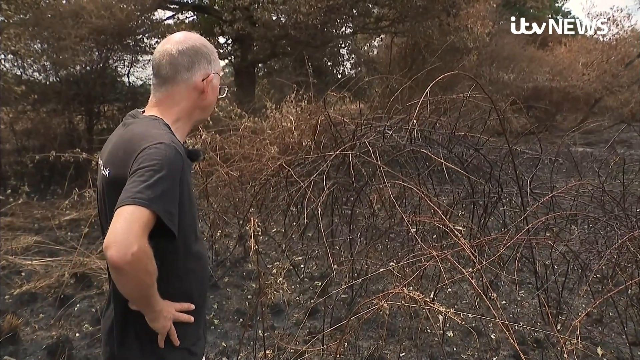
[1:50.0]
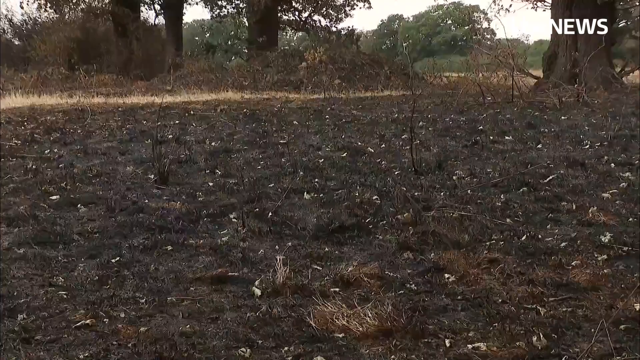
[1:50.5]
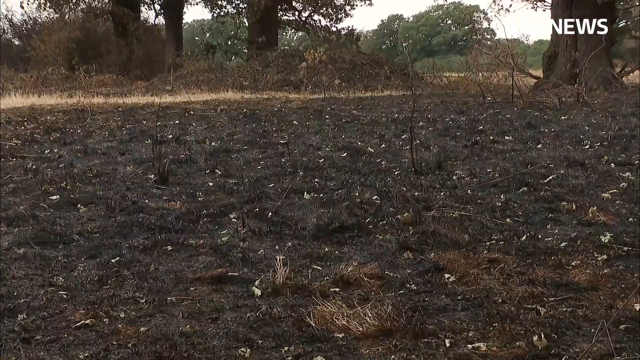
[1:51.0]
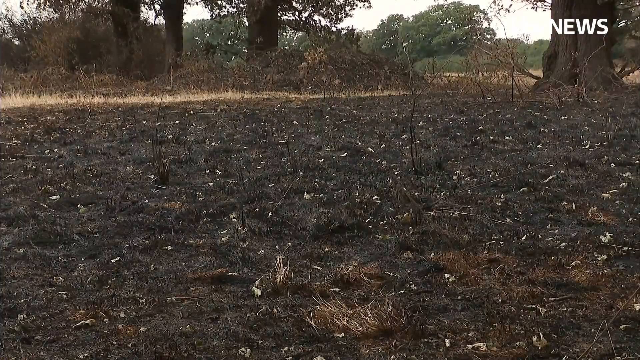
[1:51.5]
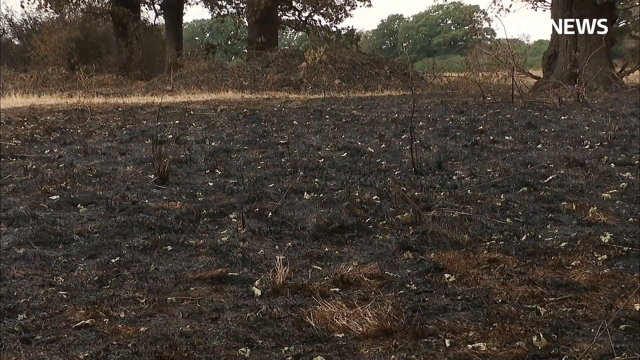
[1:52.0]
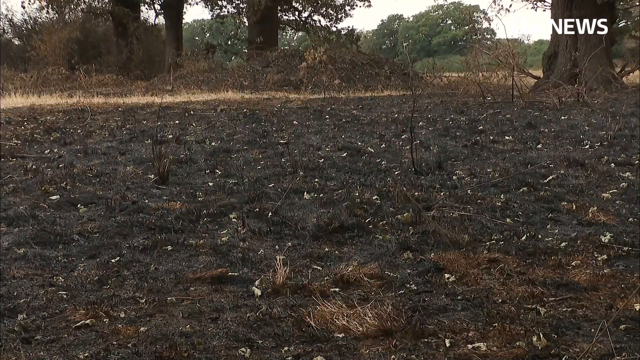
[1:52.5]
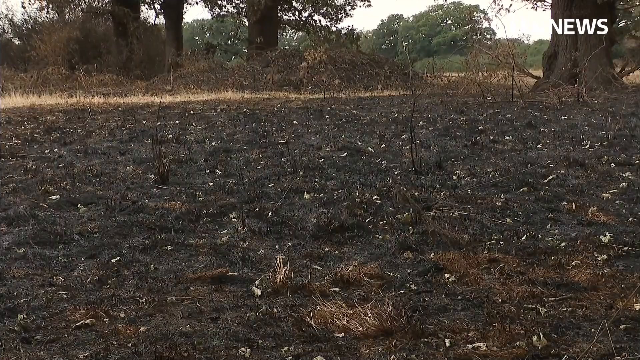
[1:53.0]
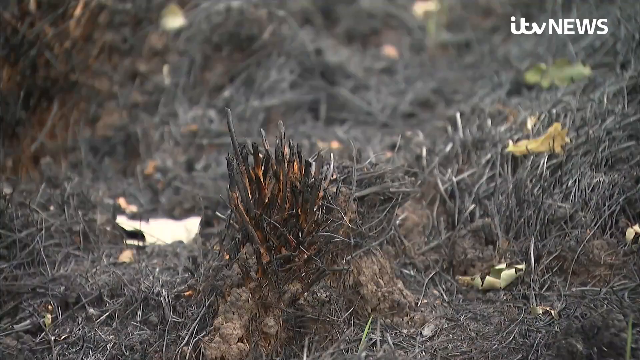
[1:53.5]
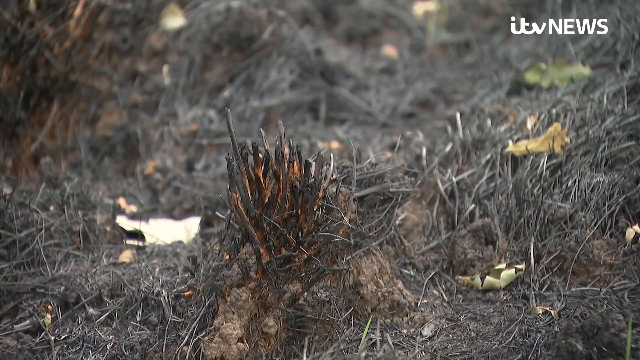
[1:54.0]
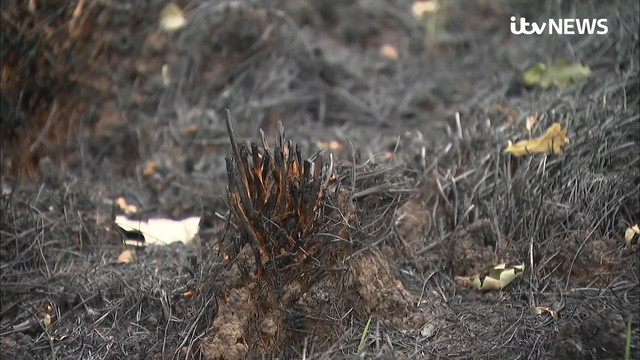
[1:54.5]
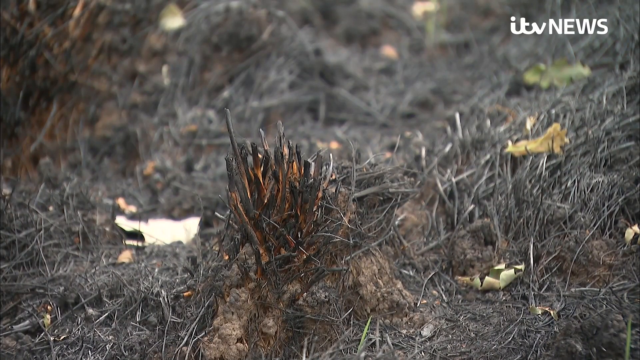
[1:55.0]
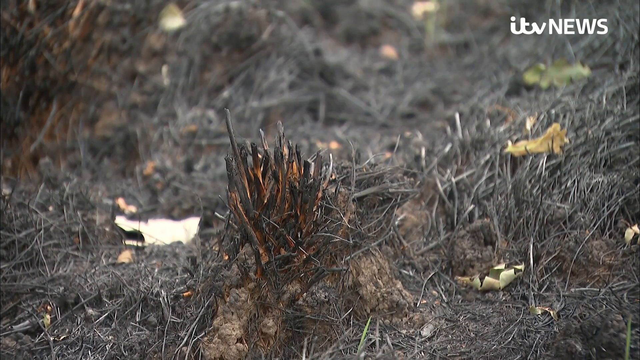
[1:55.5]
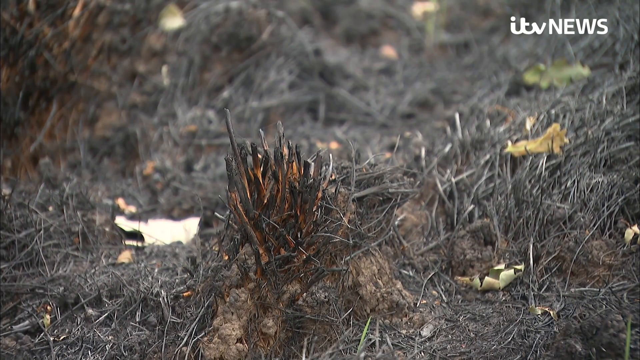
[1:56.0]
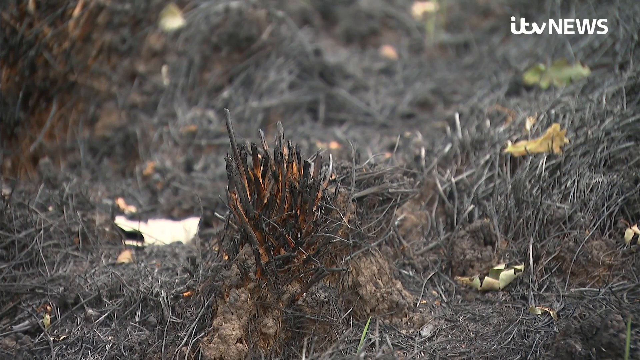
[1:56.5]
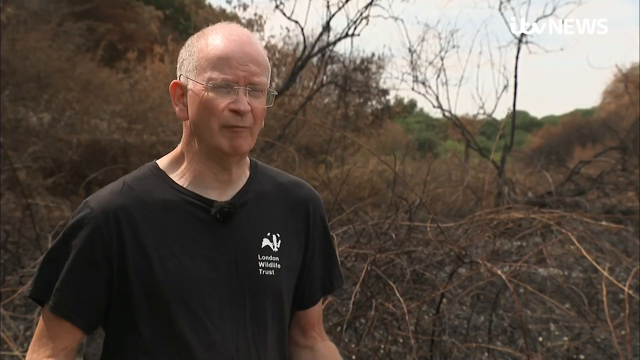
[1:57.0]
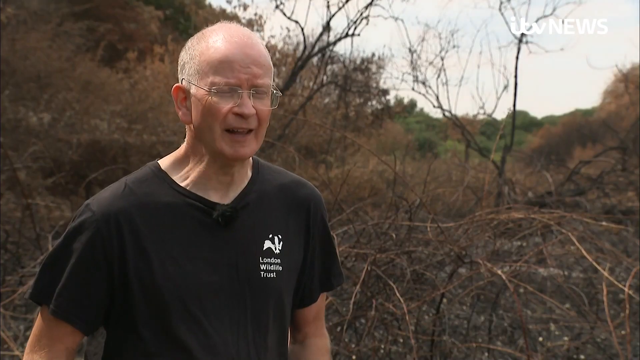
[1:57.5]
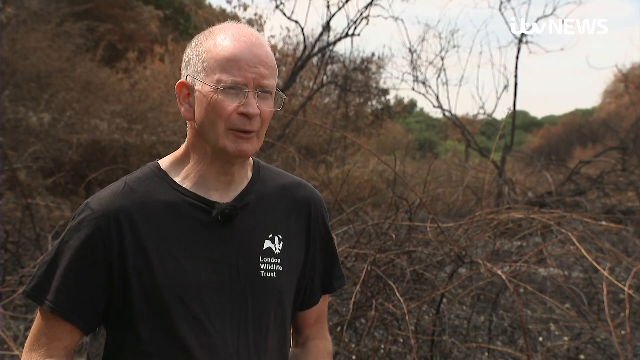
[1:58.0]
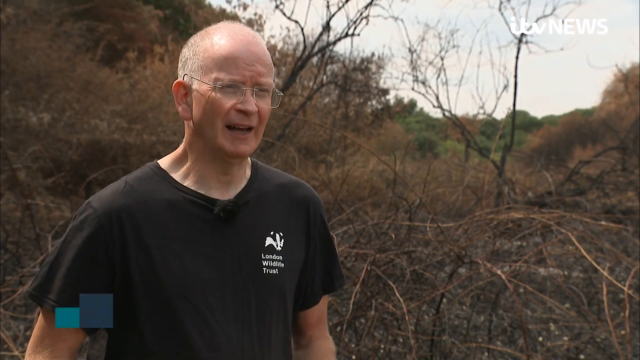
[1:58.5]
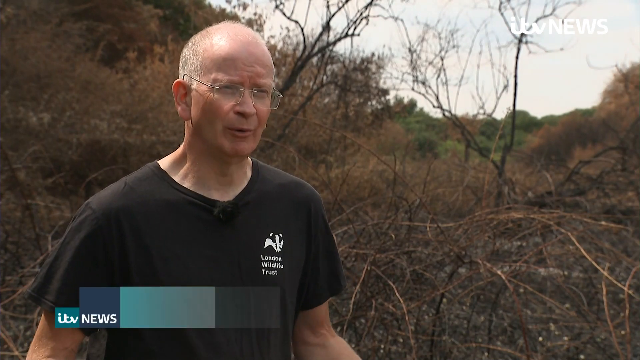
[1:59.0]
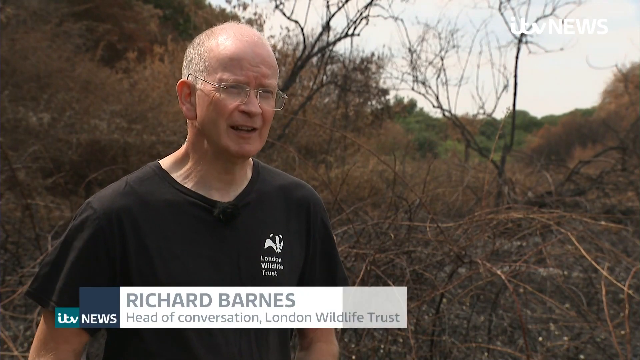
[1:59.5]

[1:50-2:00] A large burnt field is shown, its ground black. In the background there is a little dry yellow grass with trees behind it, and further back are green trees and a small view of another field of dry grass, along with some sky. The trunk of a tree is on the right-hand side. A close-up follows of the charred remains of a spiky burnt plant, with some leaves on the ground and other dried plants around it. The "itv NEWS" logo is in the upper right. A man then speaks to the camera. He wears a black t-shirt with a white logo, has very short white hair and glasses, and stands in front of a dried brush field with a few green trees in the far back. Text at the bottom of the screen identifies him as "Richard Barnes, Head of Conversation, London Wildlife Trust".